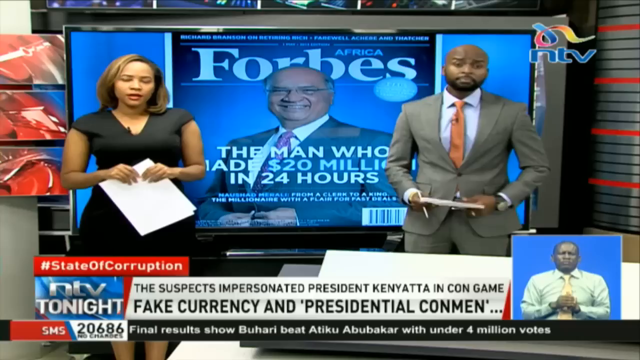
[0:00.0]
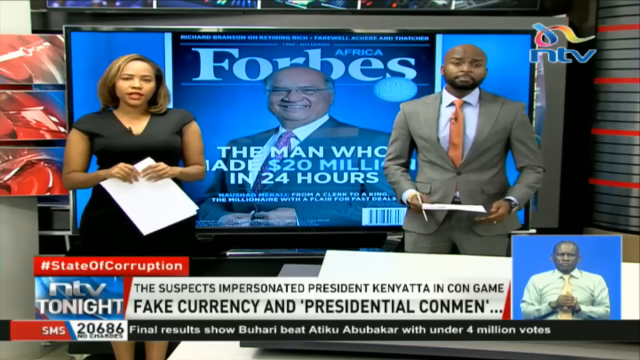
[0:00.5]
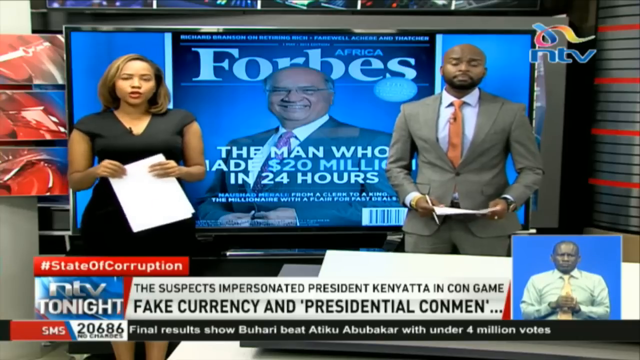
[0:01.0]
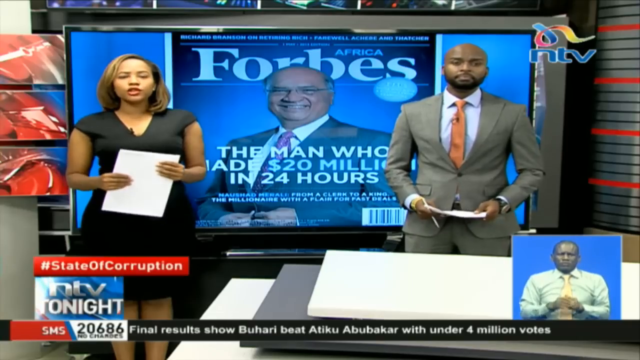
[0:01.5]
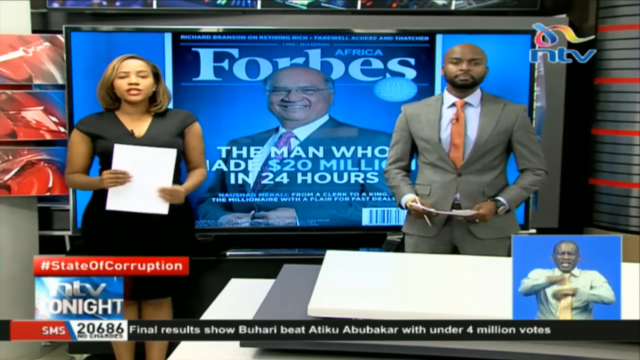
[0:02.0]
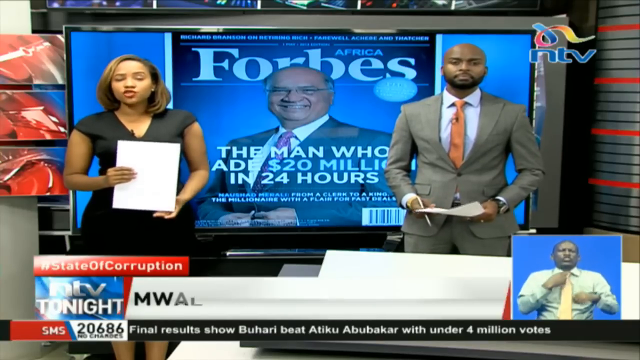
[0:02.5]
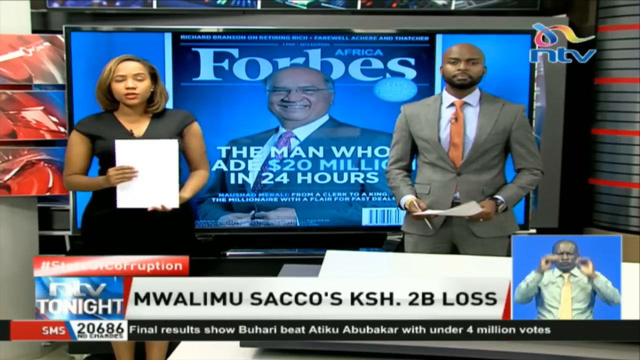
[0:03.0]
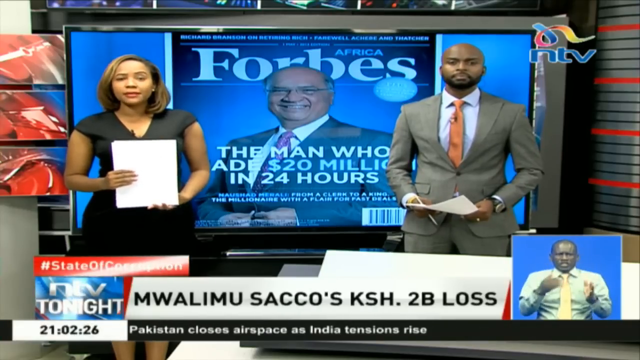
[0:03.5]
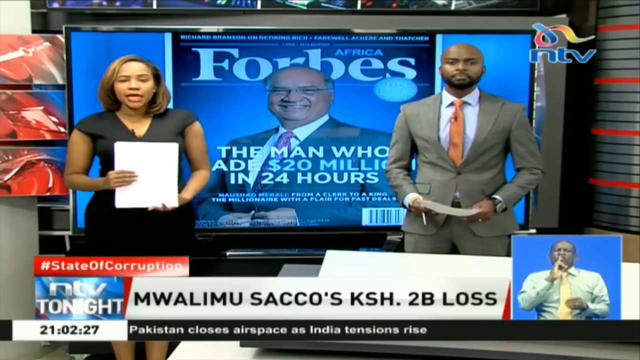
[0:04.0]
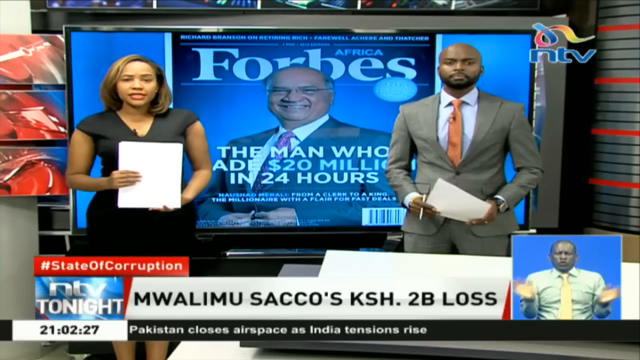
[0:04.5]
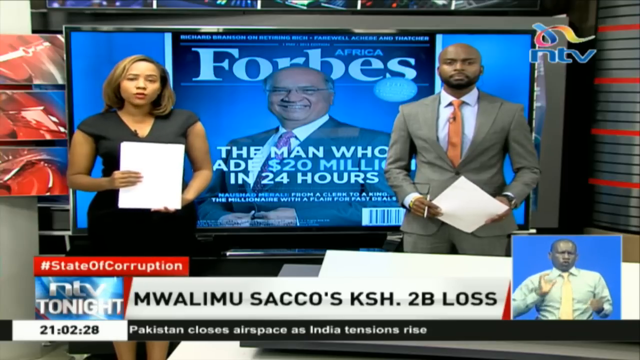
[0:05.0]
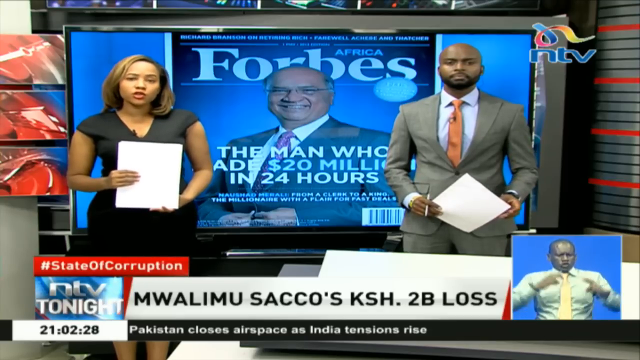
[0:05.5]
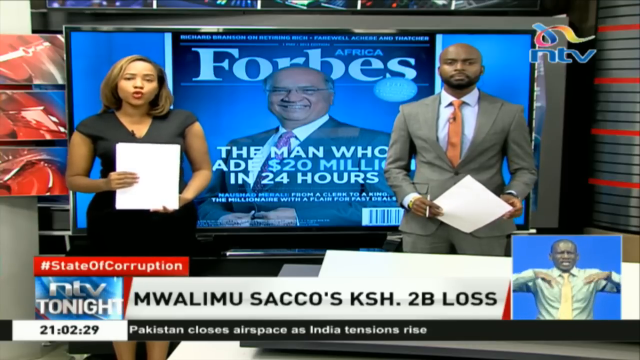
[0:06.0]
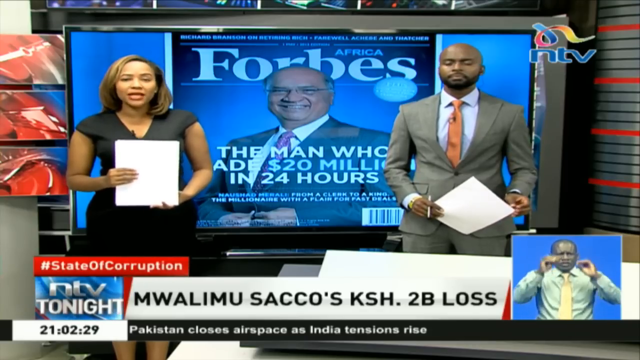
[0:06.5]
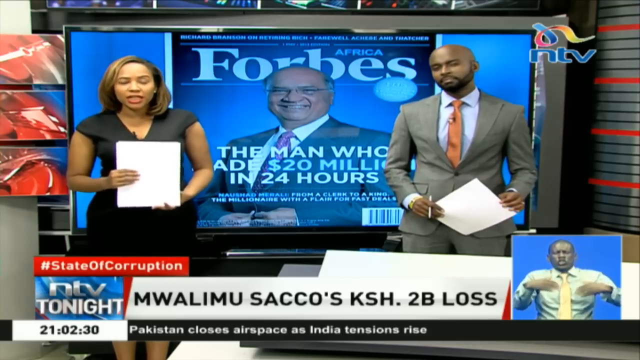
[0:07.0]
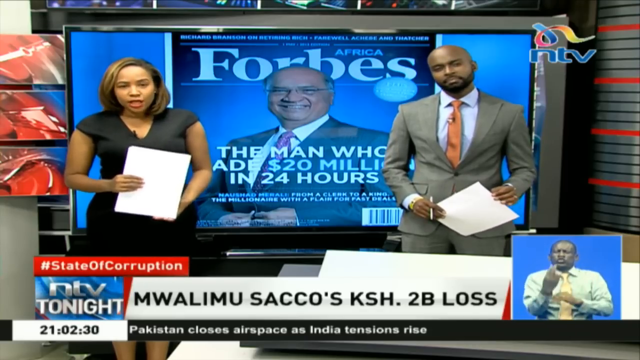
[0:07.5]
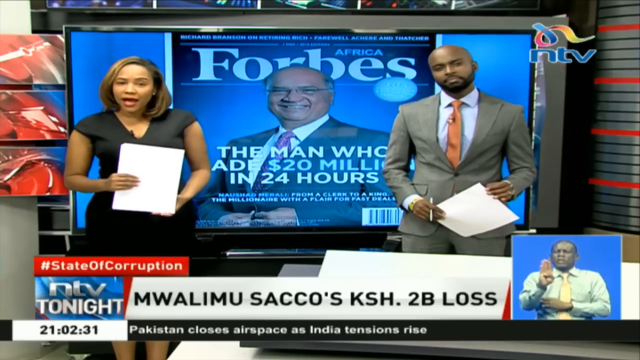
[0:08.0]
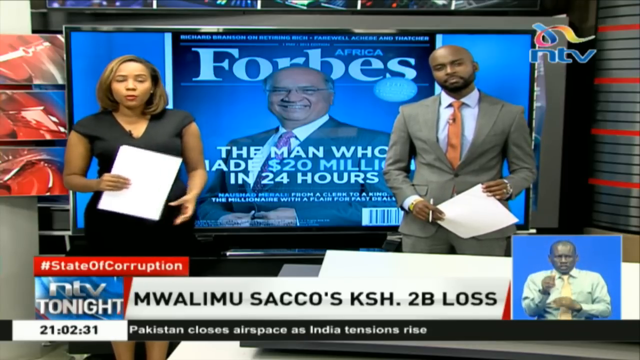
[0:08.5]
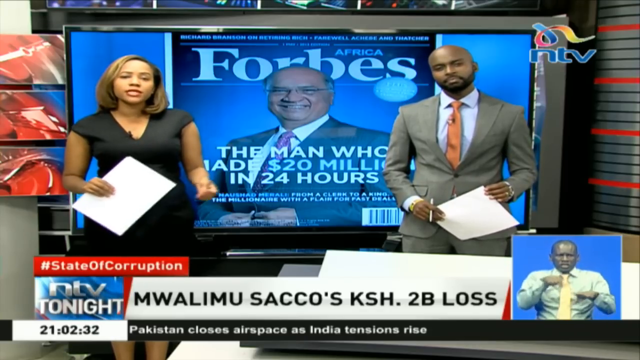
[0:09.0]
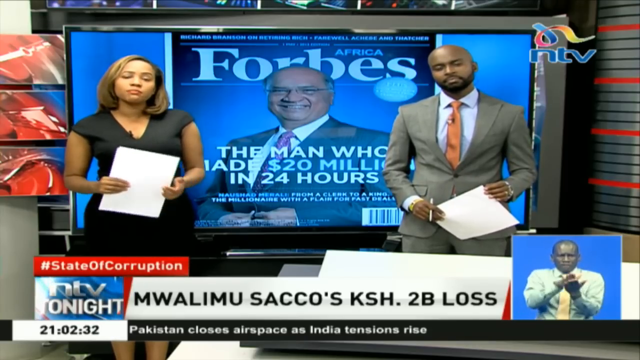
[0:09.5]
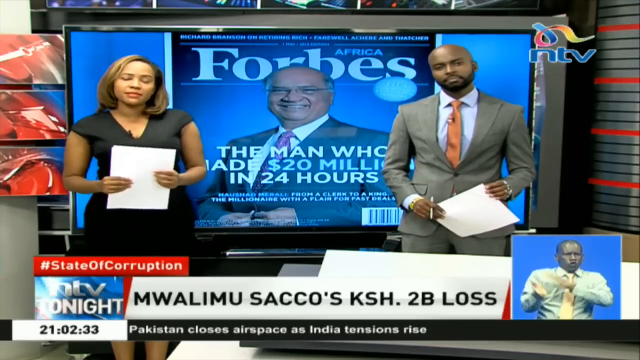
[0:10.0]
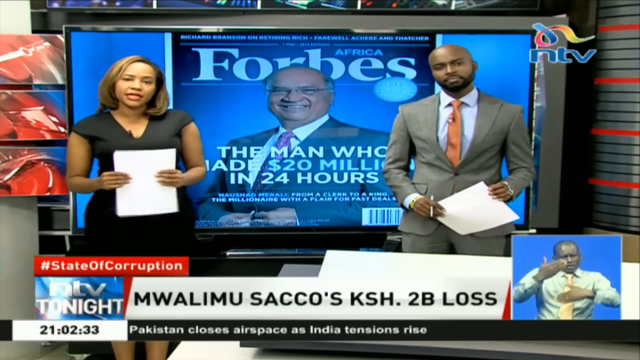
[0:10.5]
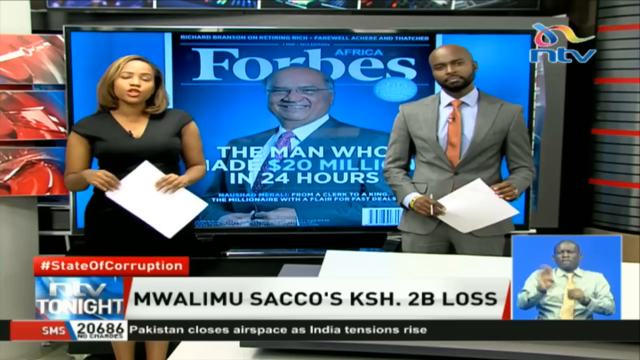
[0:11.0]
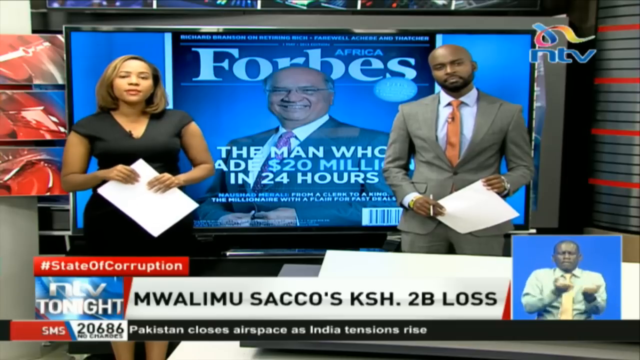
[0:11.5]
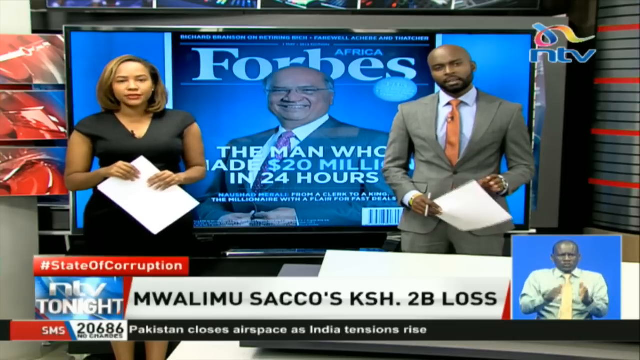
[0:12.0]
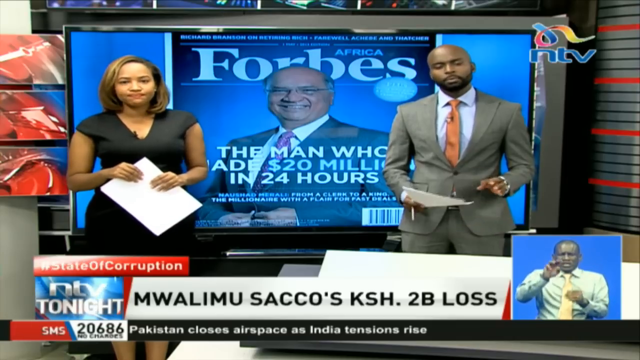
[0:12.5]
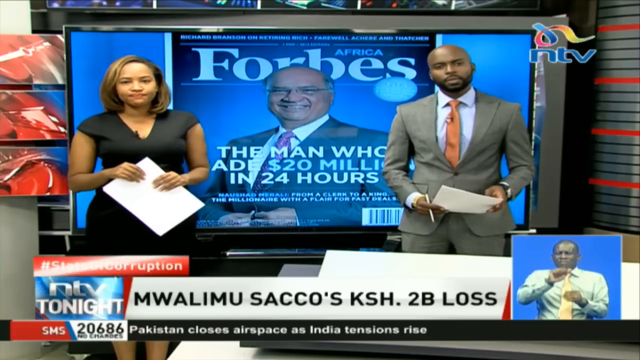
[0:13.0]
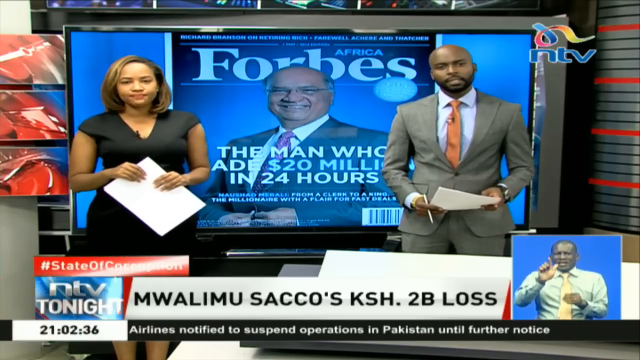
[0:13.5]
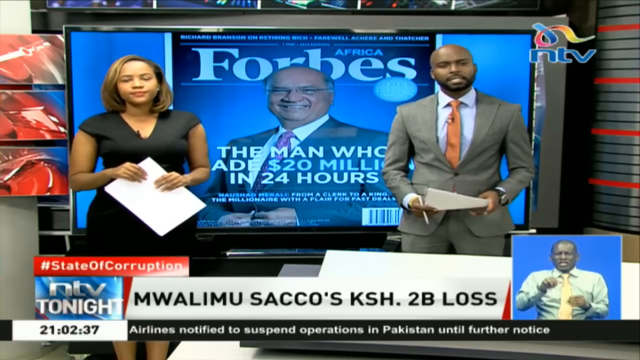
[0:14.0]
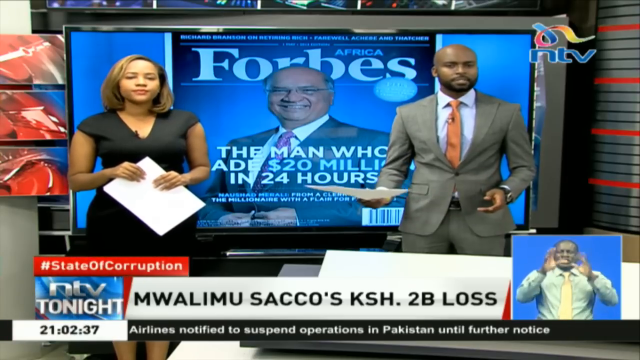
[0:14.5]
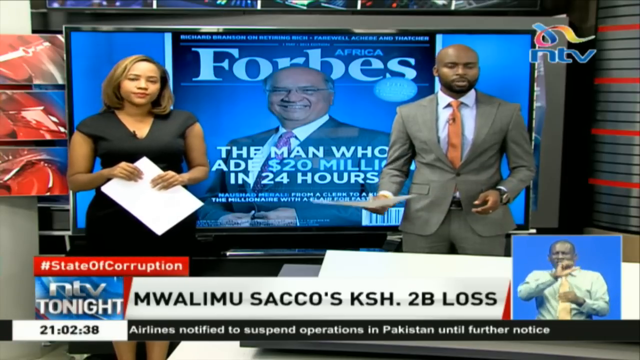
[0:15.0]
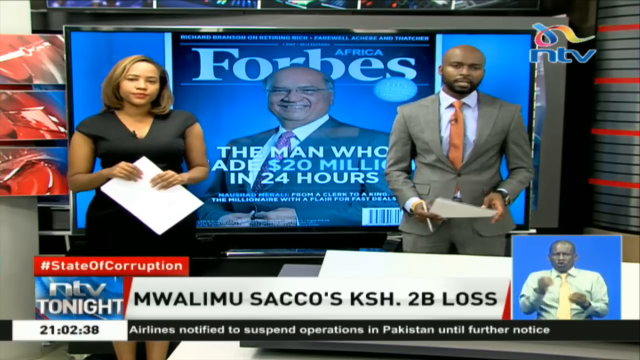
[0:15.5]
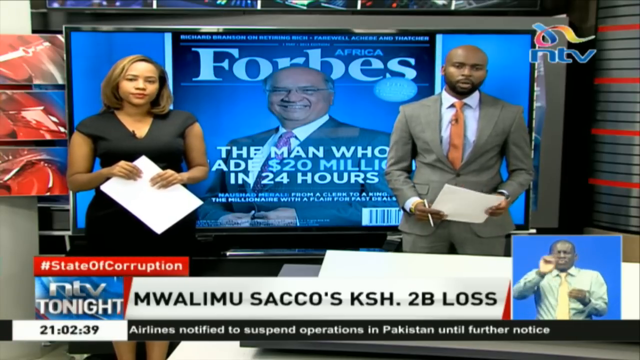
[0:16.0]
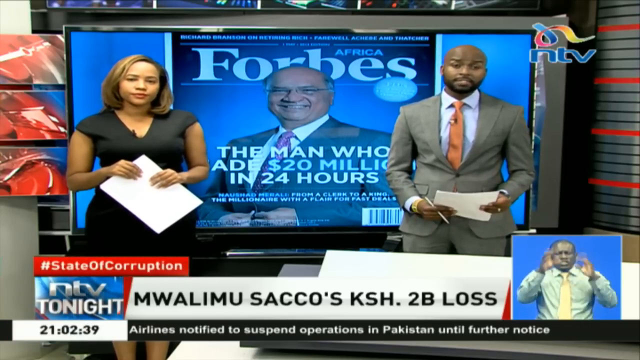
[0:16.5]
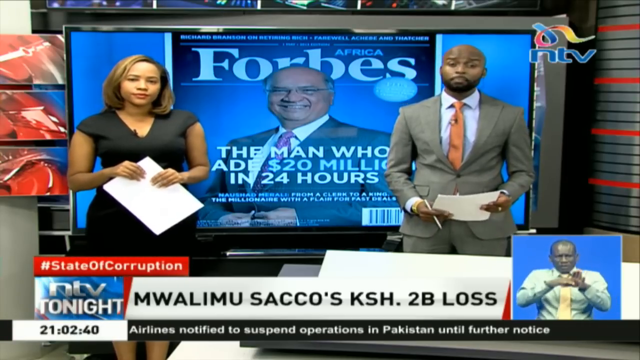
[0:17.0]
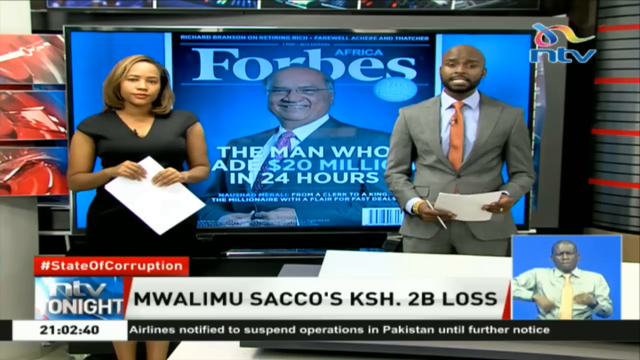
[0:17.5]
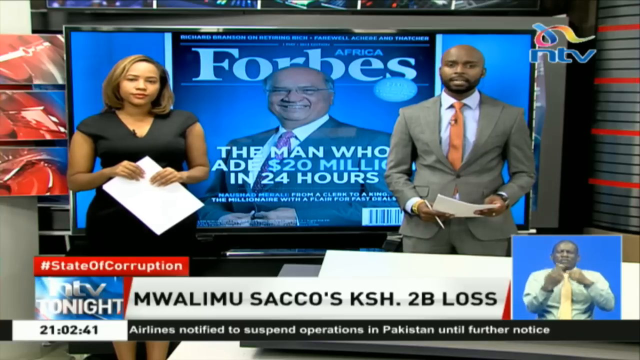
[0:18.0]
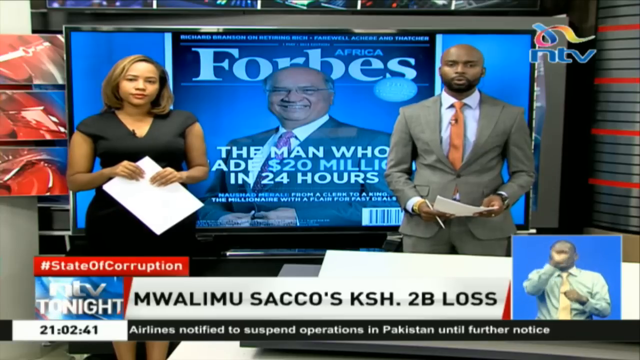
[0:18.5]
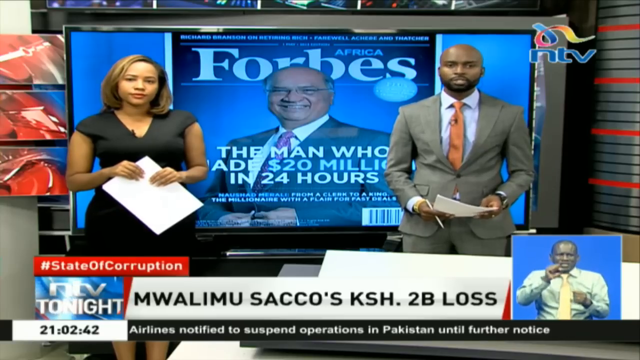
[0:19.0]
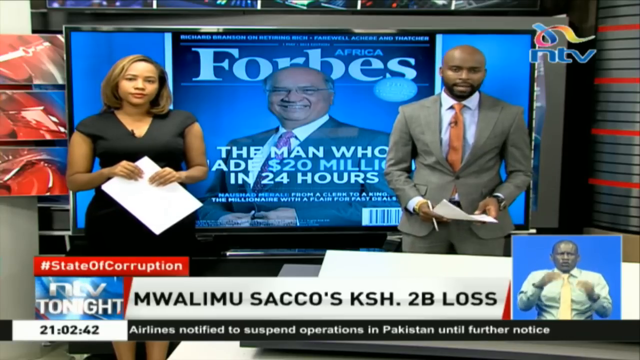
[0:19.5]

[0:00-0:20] The video opens on the news channel NTV. The NTV emblem appears in blue in the upper right corner of the screen, with a curling ribbon in rainbow colours above it. Two newscasters are on screen. The woman on the left is in her early 30s, with light skin and lighter hair, wearing a black sleeveless dress. The man on the right is probably in his early 30s, bald, African-American, with a mustache and beard; he wears a tan suit, a white shirt and an orange tie. Directly behind them is Africa Forbes, with a picture of an older man and the text "the man who made 20 million dollar homes in 24 hours". In the bottom left corner is "NTV Tonight". The main headline in the middle reads "the suspects impersonated President Kenyatta in con game", and beneath it is "fake currency and presidential con men".